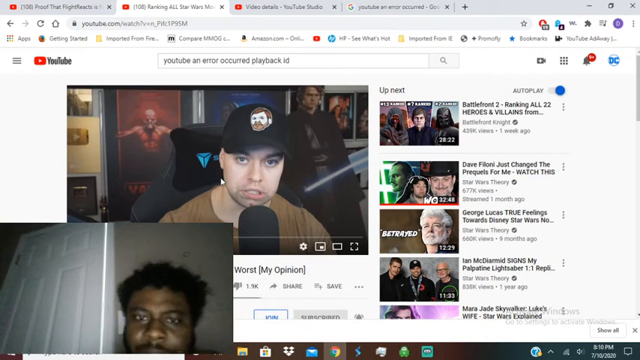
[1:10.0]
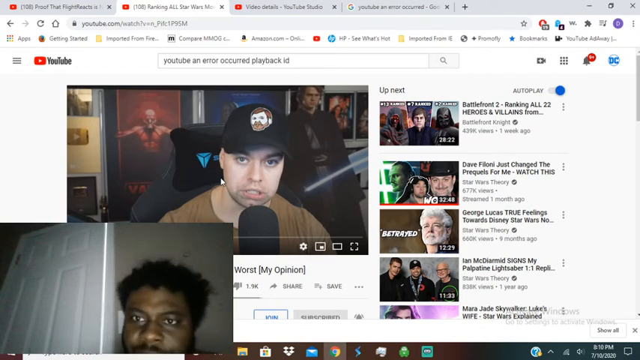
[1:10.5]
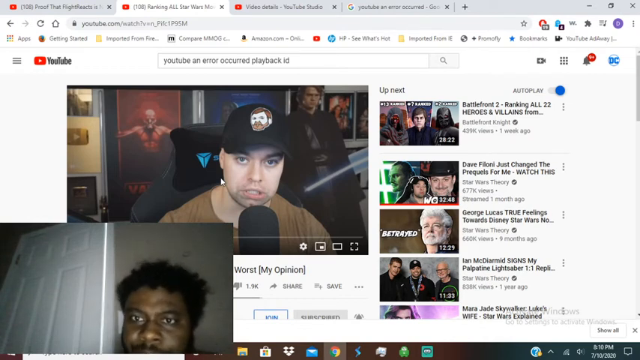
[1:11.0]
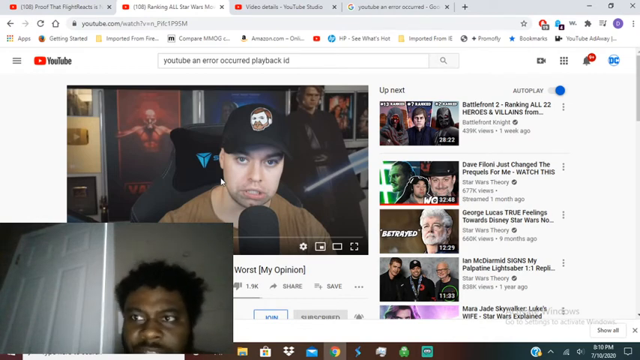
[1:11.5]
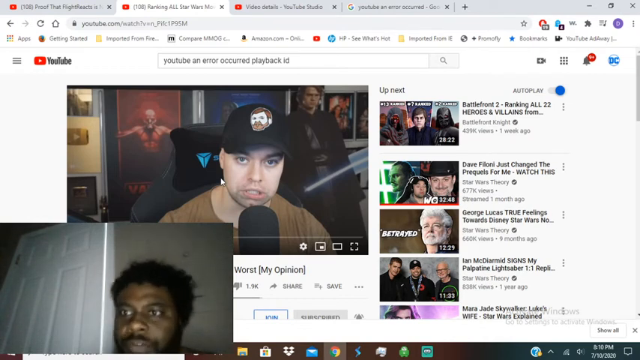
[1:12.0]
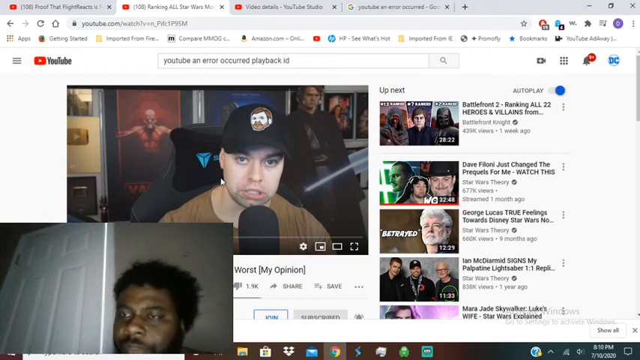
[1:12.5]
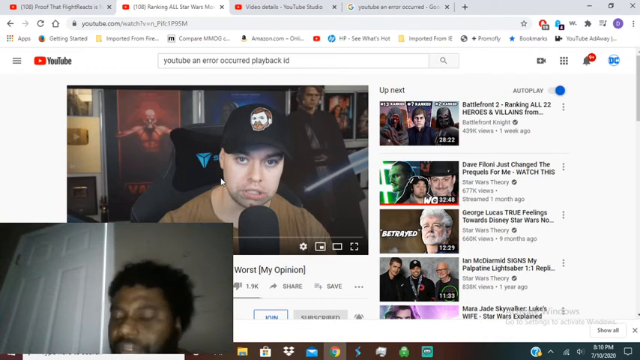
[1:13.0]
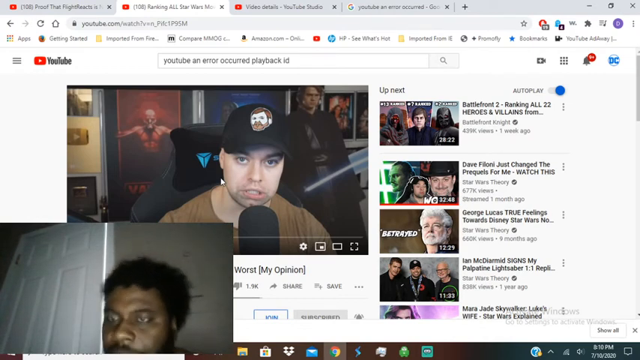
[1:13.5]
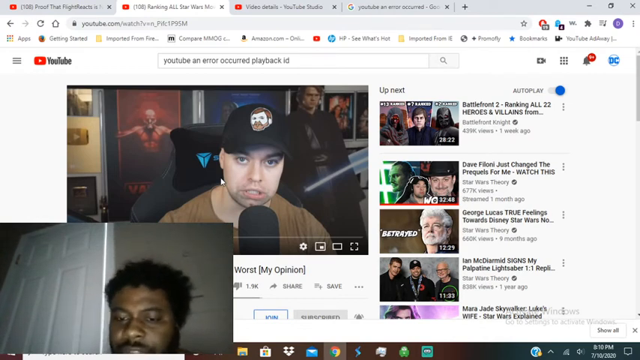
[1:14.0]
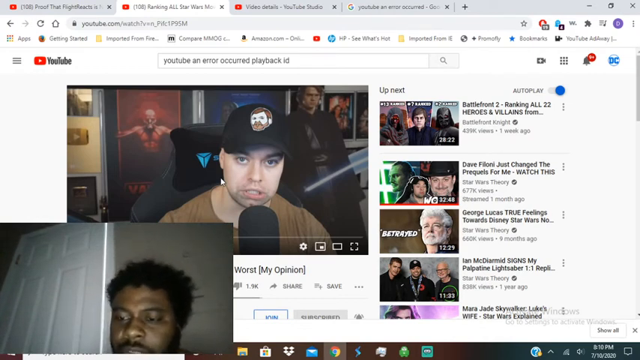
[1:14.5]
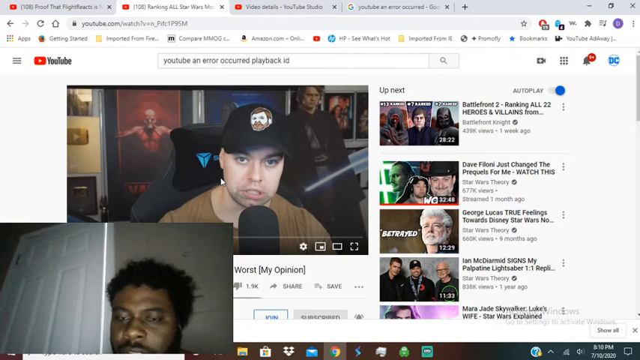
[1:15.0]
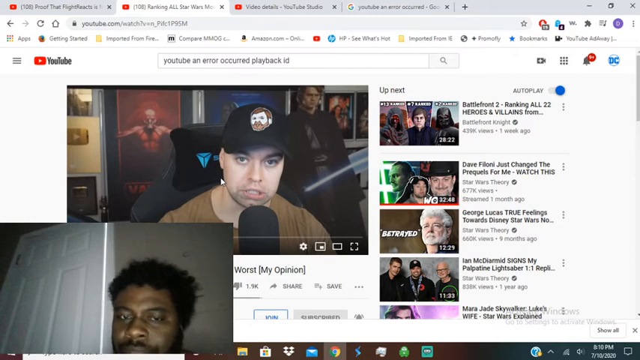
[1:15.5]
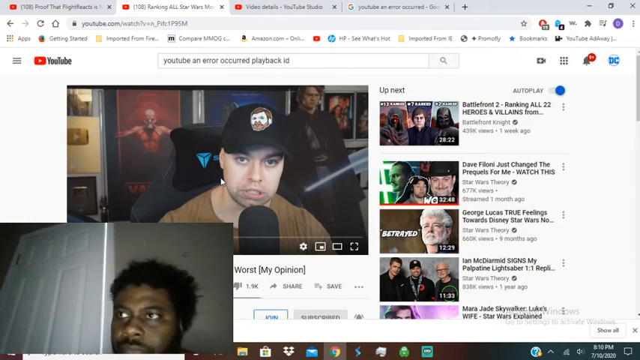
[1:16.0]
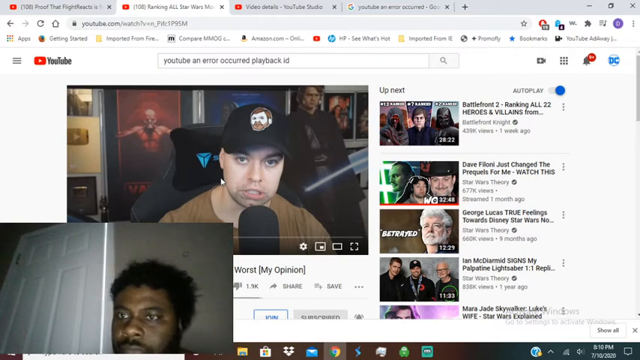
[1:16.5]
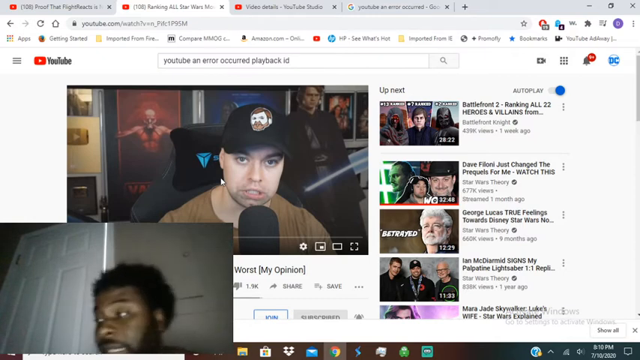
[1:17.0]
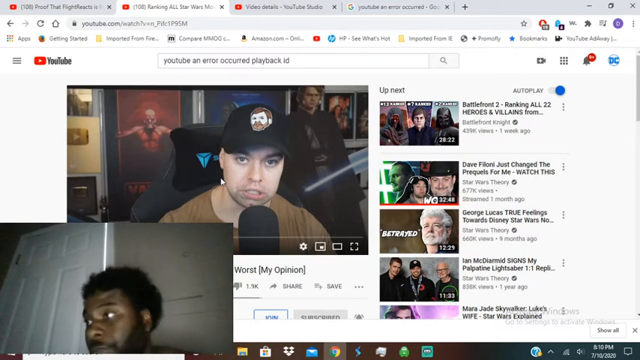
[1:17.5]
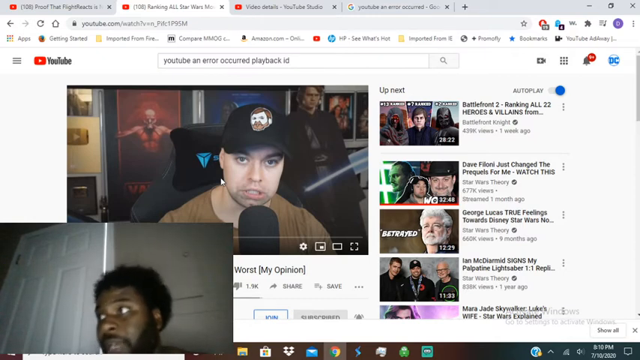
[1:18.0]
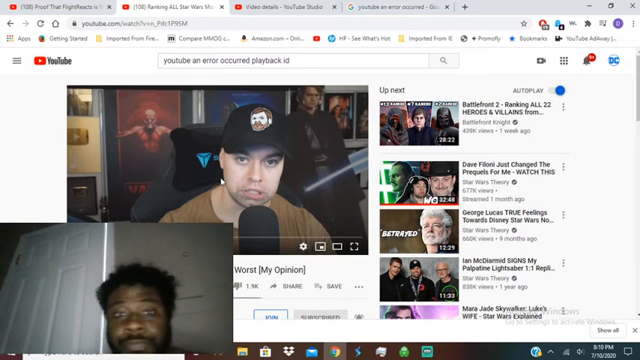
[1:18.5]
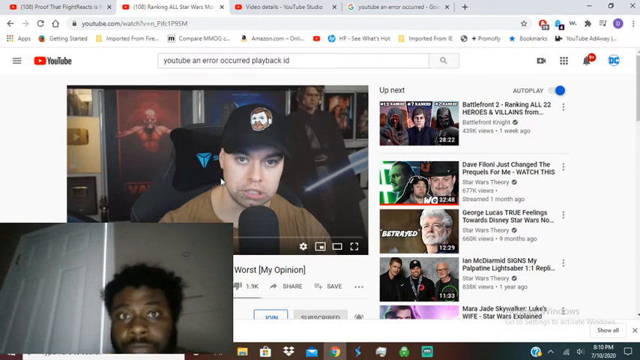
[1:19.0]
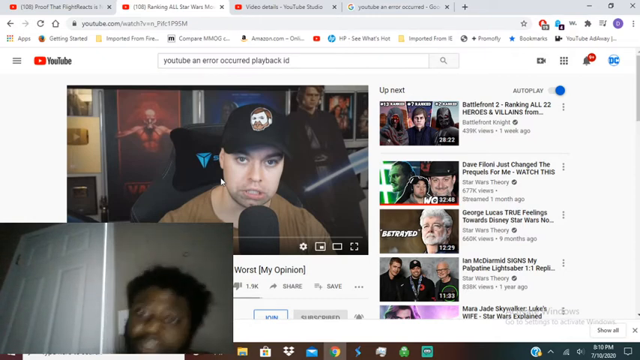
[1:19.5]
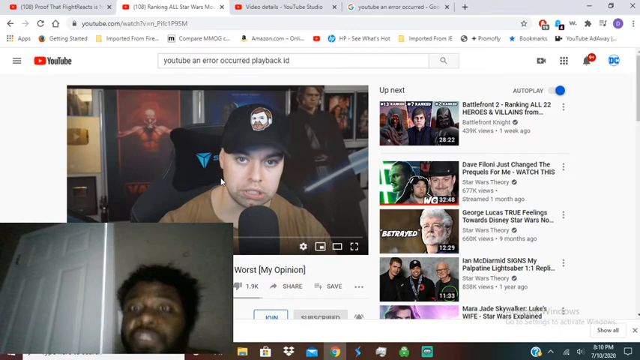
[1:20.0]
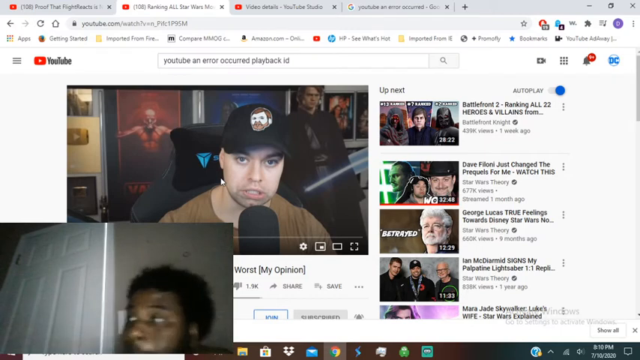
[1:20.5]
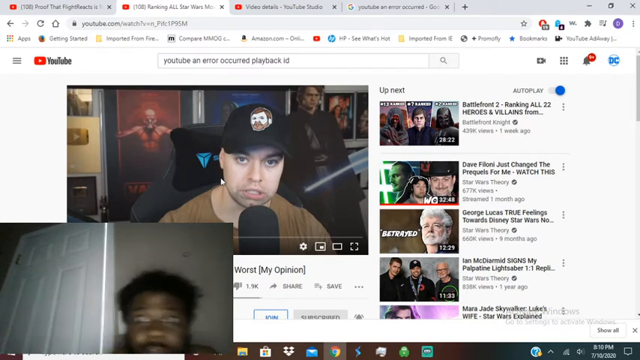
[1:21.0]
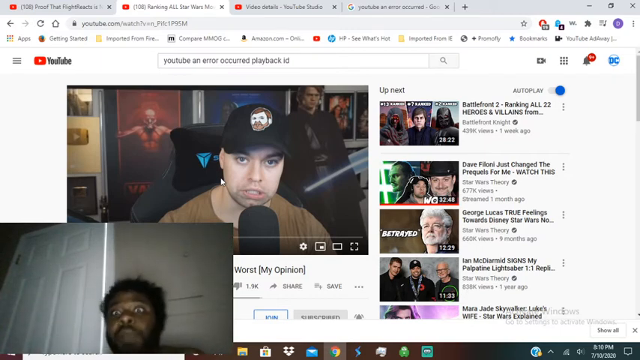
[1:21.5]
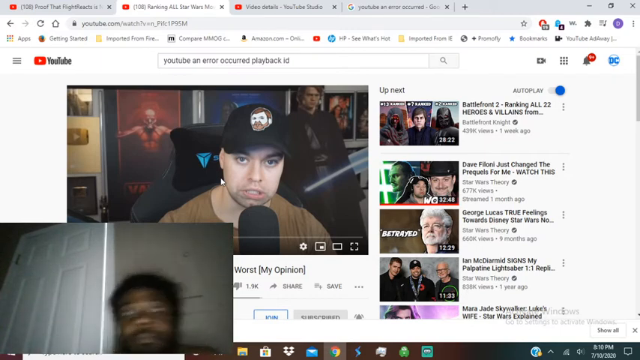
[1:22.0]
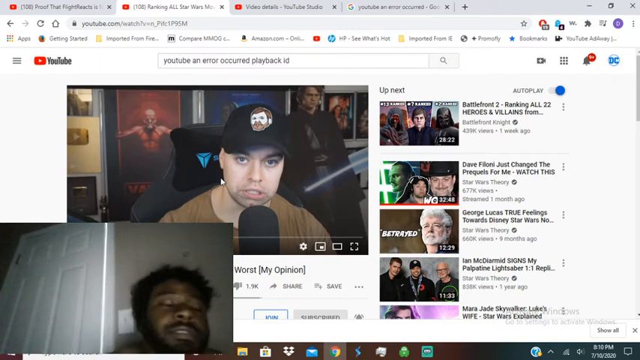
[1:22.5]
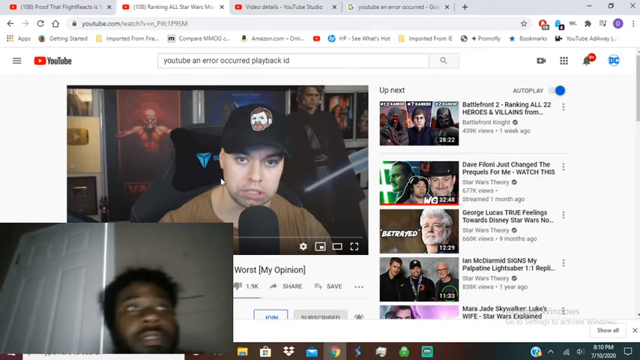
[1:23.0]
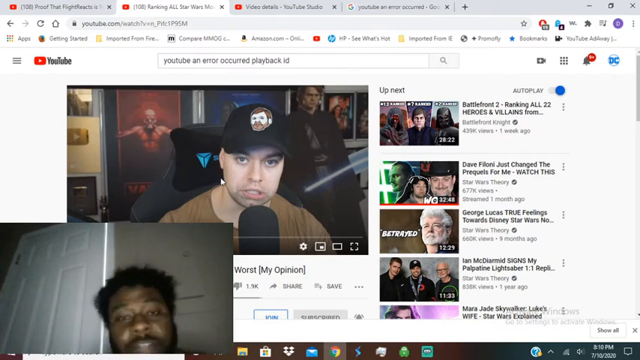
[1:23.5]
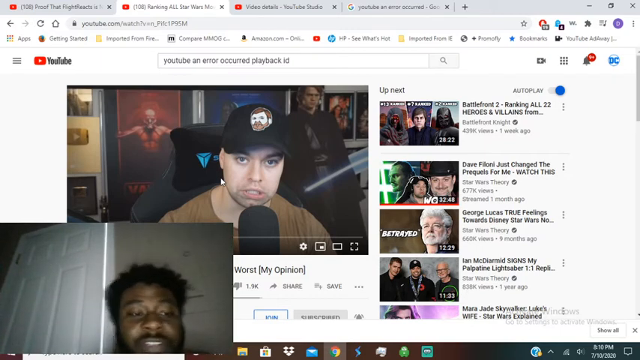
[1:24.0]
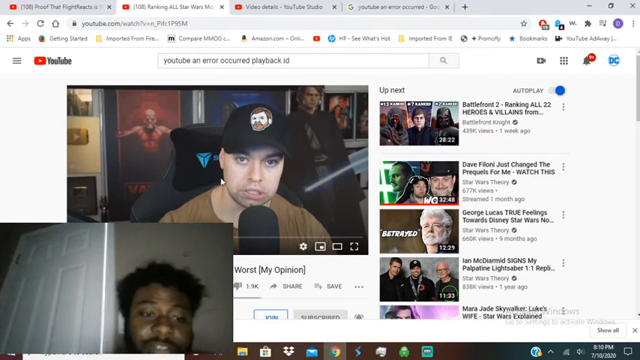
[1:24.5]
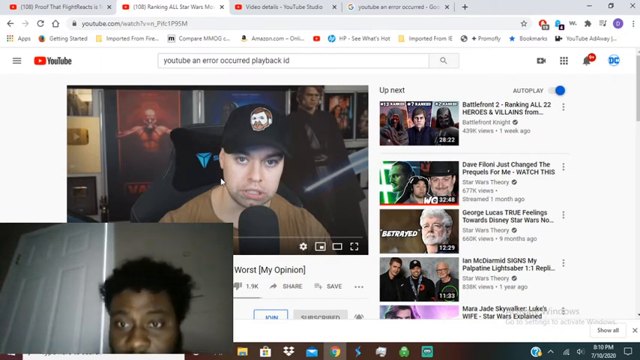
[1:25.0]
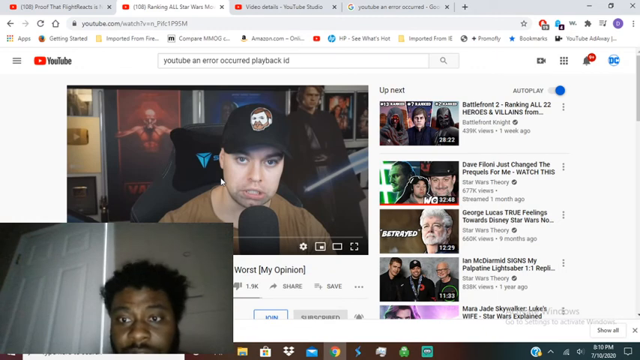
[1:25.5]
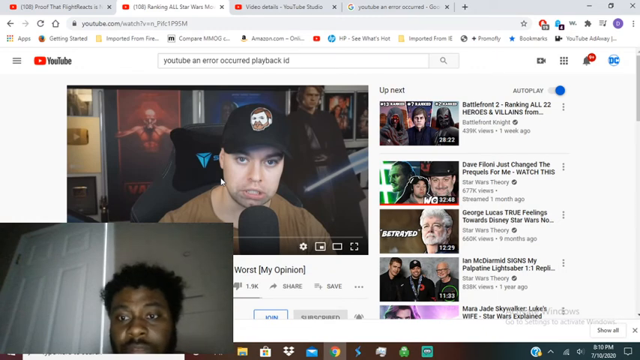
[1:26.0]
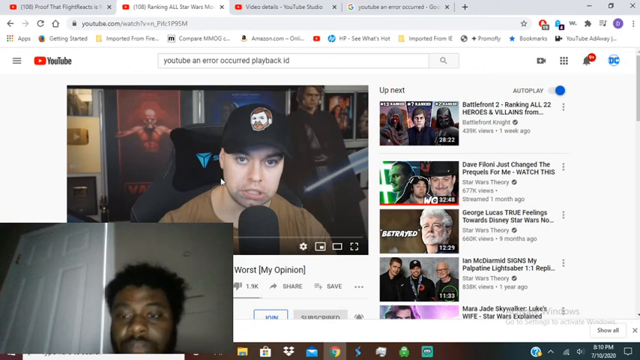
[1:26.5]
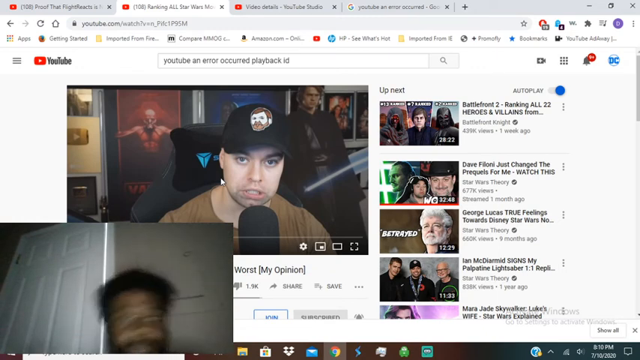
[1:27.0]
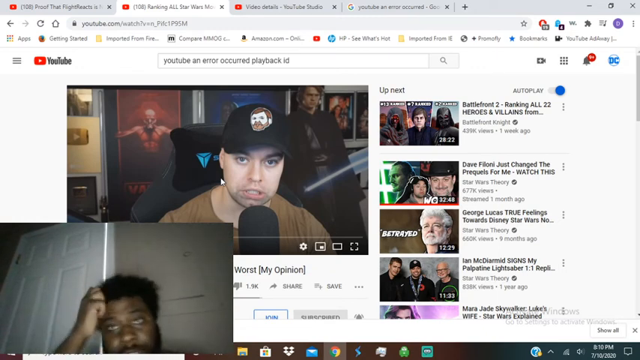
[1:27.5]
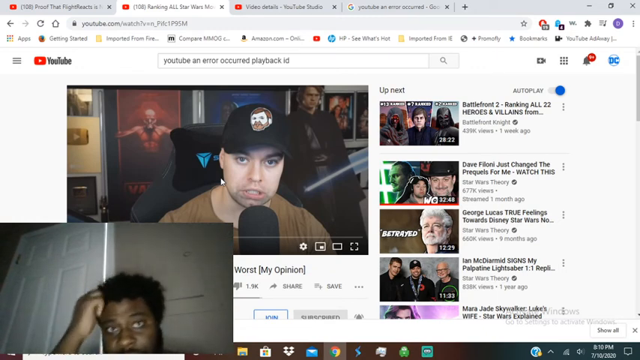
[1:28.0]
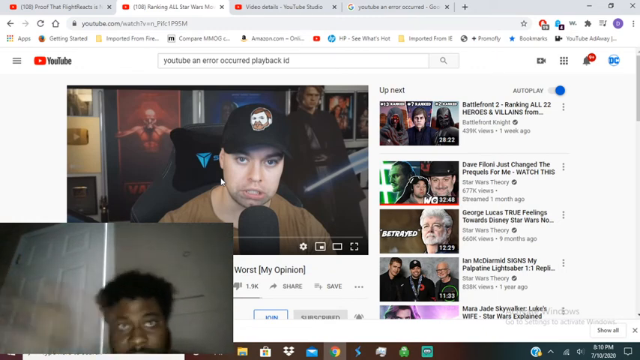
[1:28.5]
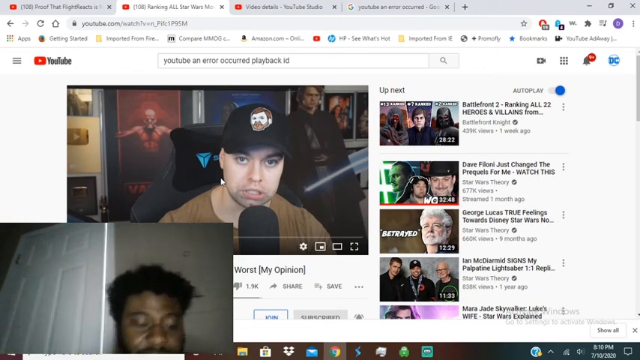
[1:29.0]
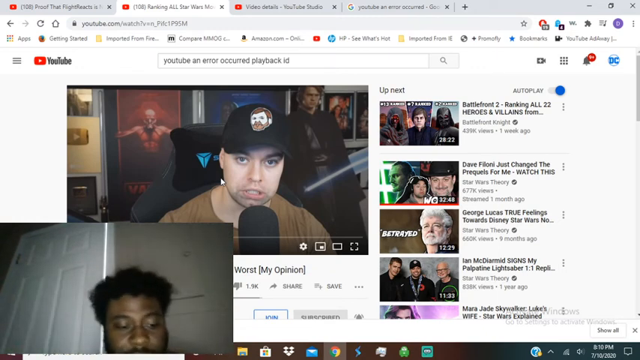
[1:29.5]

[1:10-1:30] A PC monitor shows four open tabs: three YouTube tabs and a Google search tab. The main screen shows a YouTube video of a man sitting in a game chair, with posters of movie franchises behind him; he wears a ball cap and has a microphone in front of him. In the bottom left is a live video, apparently of the person whose screen is shown, with only his head, his hair and the door behind him visible. He looks frustrated and talks toward his screen. He shakes his head, his eyes show frustration, and he waves his hands as if he just doesn't know. He shakes his head in doubt, scratches his head, and sort of waves his hand as if he is done with this.